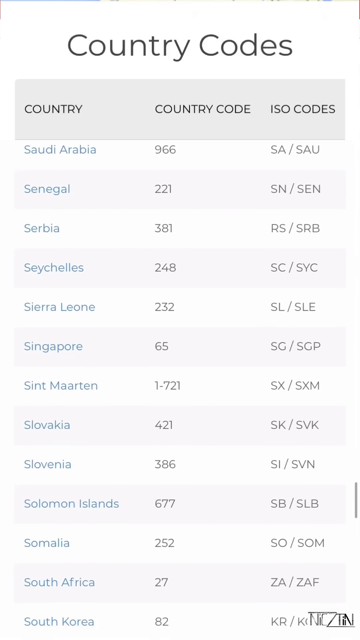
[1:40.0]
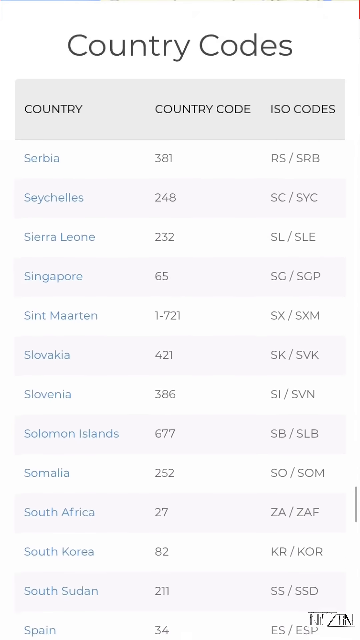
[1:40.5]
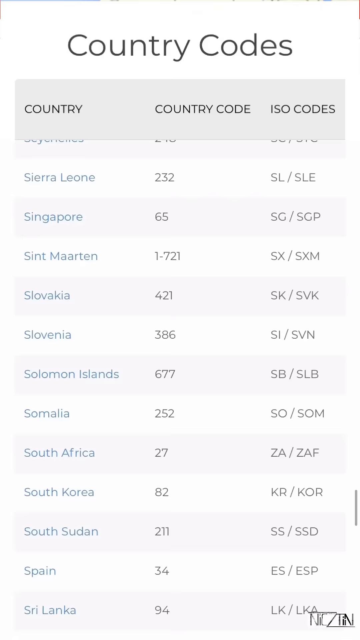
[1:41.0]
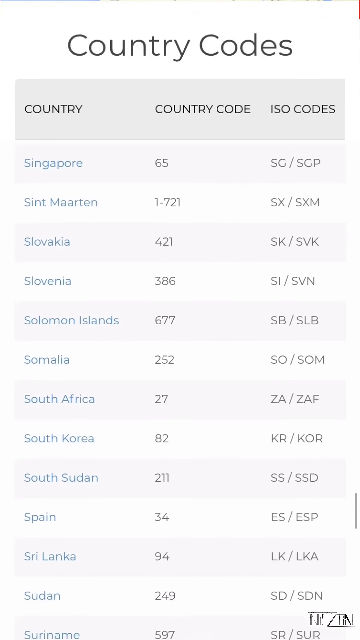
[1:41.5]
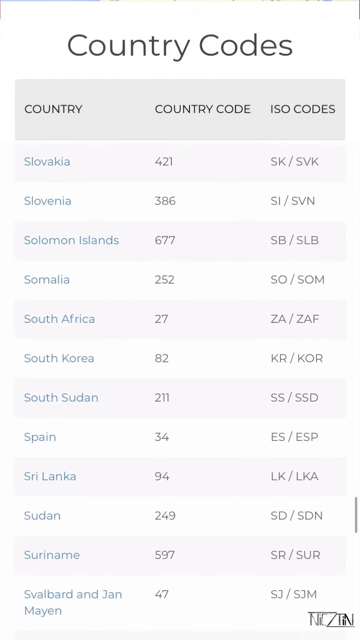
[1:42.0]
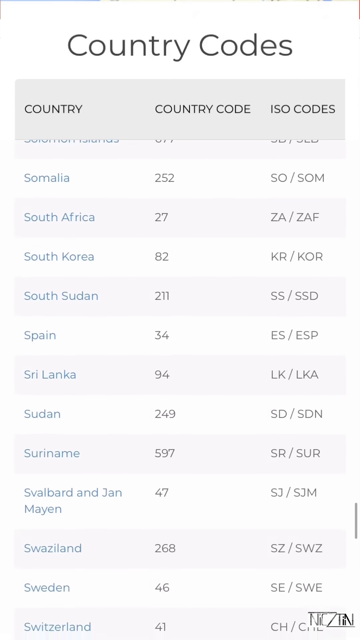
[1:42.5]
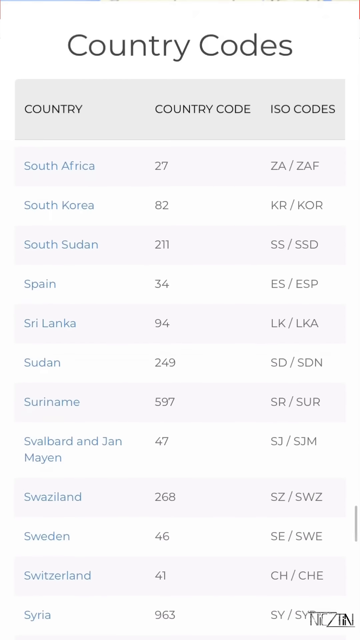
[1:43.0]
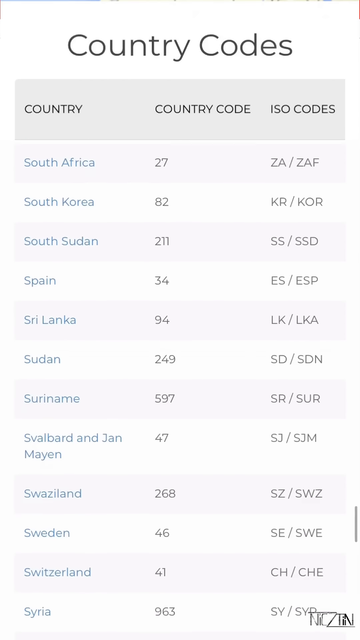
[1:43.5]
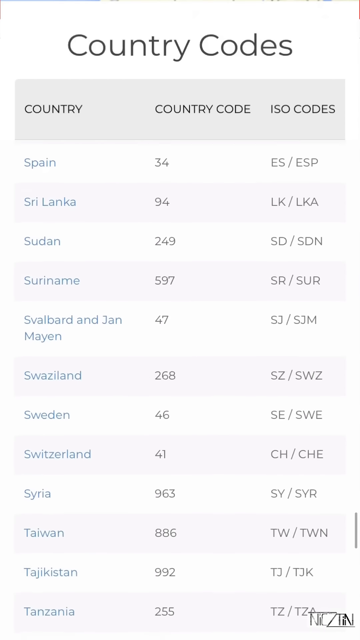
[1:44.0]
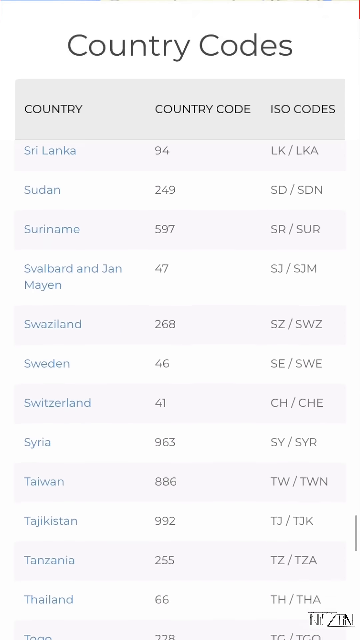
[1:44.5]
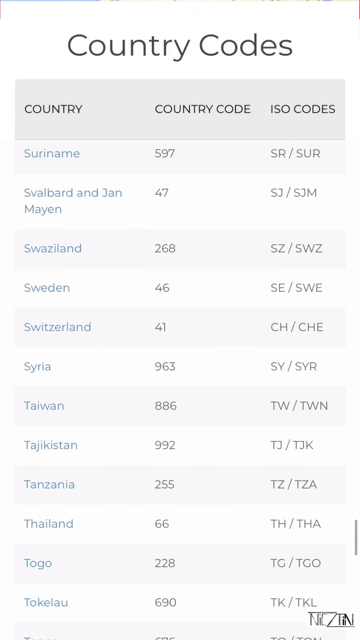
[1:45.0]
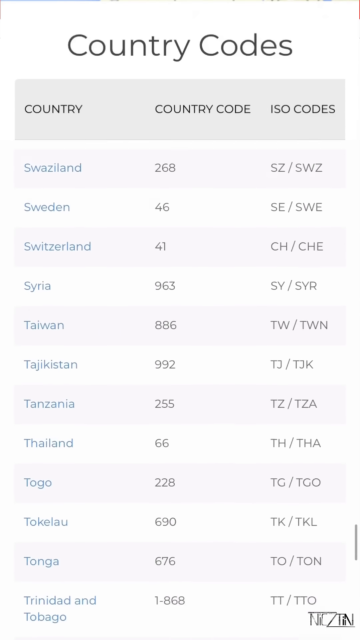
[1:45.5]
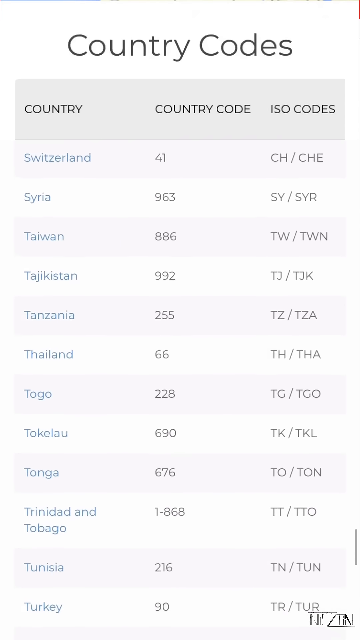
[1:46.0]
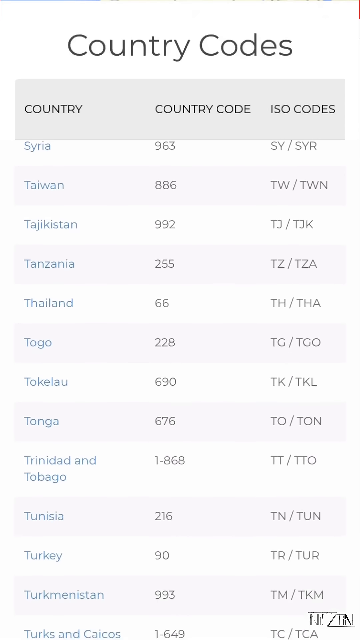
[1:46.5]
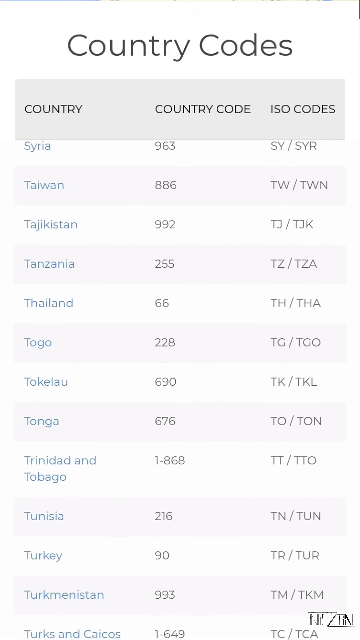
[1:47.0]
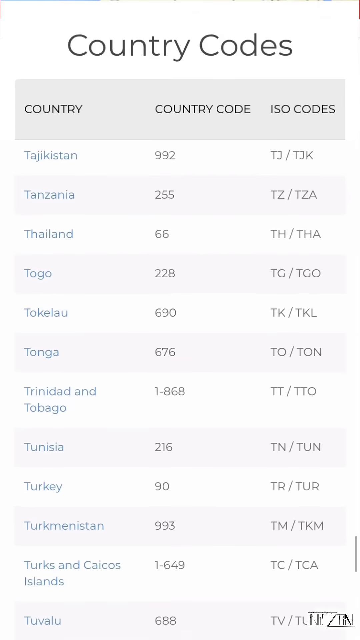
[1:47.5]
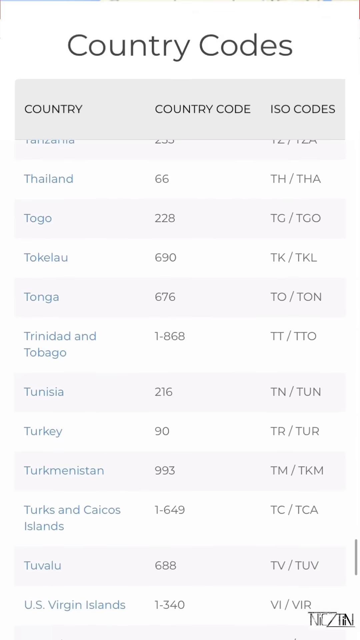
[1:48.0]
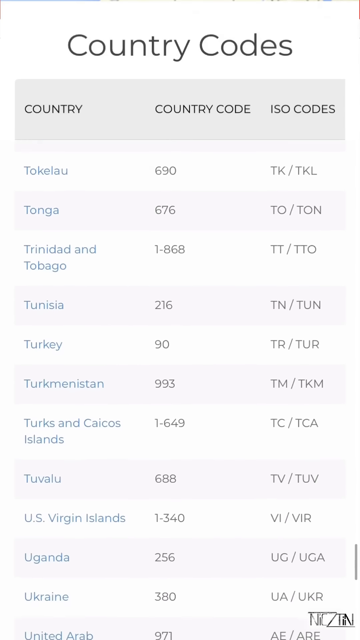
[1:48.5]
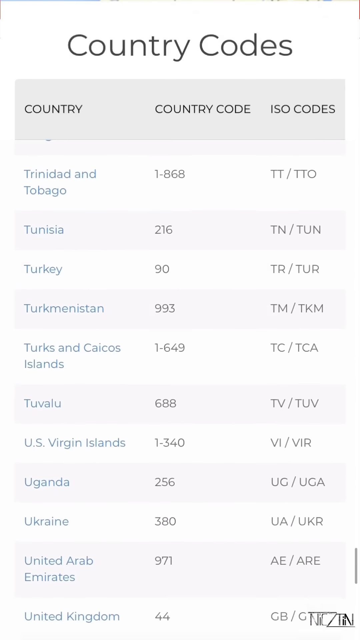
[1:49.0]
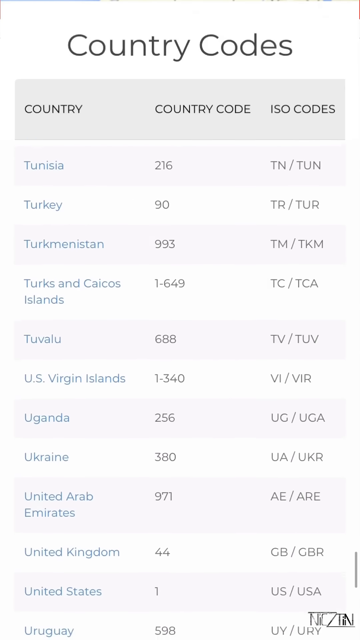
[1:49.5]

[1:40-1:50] The list continues through the S's and into the T's. The title "country codes" and the headings "country," "country code," and "ISO codes" stay fixed at the top, while the full country names, the code numbers, and the ISO letter series scroll beneath them. Country codes are mostly two- or three-digit numbers, though two entries show a one followed by a three-digit number. Each ISO code has two capital letters, a slash, and three capital letters. Among the S countries, the first letters of the ISO codes differ, but the second part seems to always start with S.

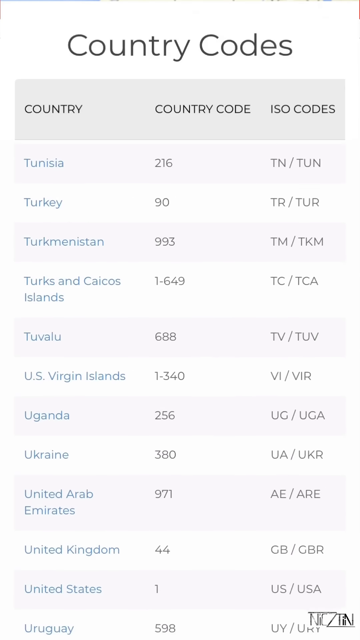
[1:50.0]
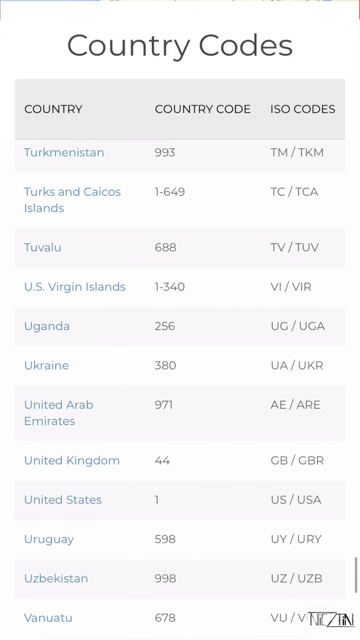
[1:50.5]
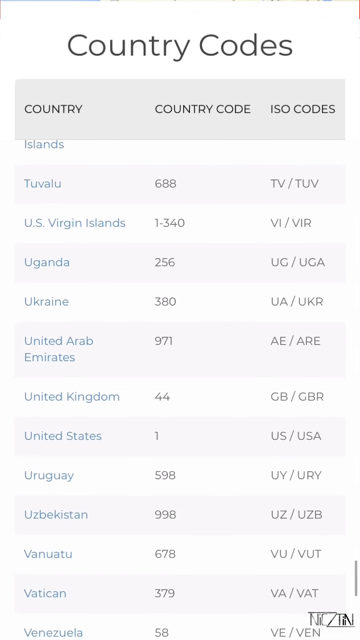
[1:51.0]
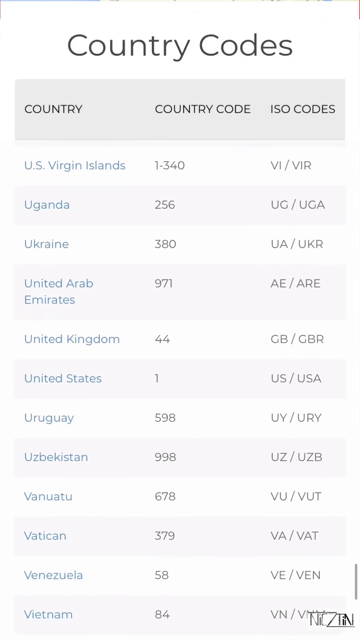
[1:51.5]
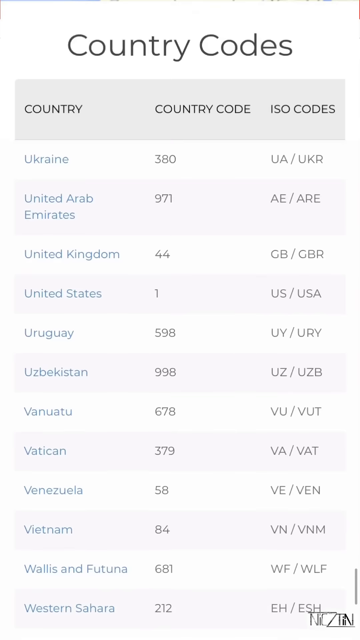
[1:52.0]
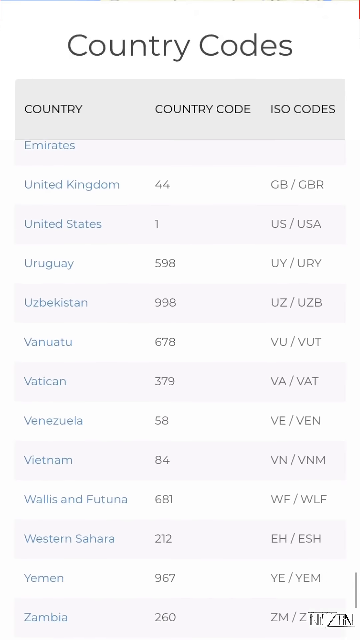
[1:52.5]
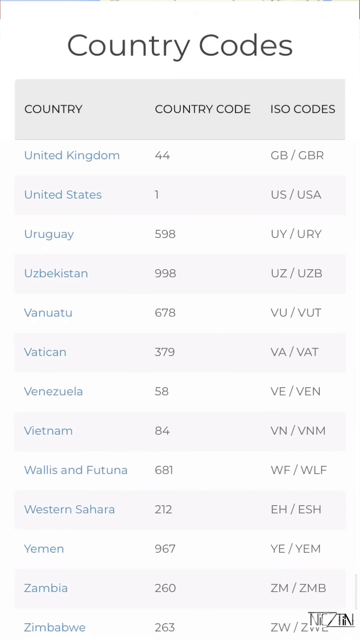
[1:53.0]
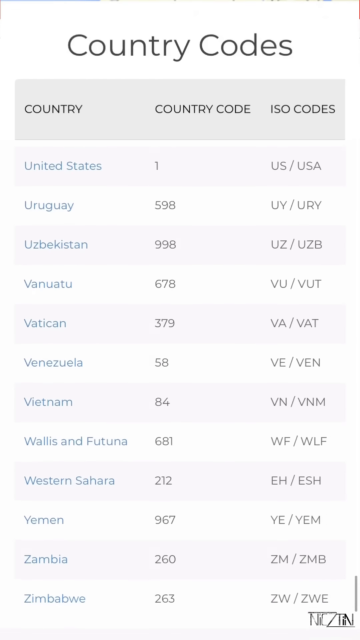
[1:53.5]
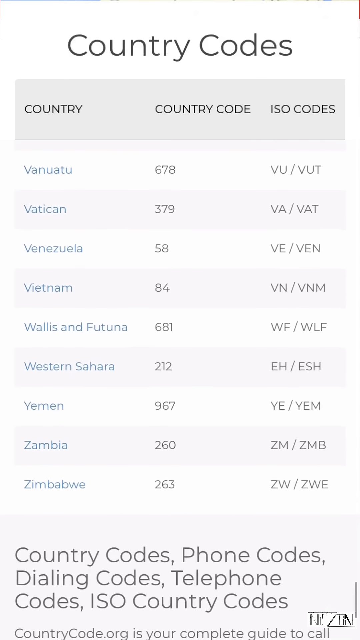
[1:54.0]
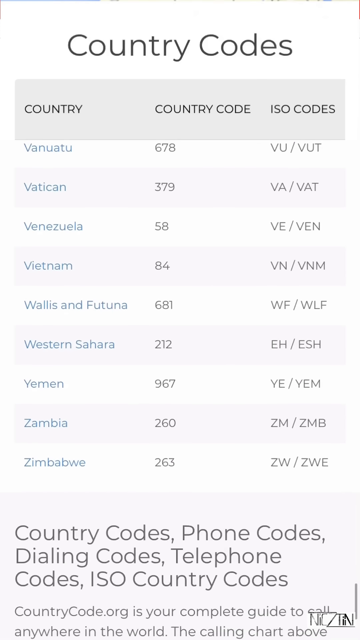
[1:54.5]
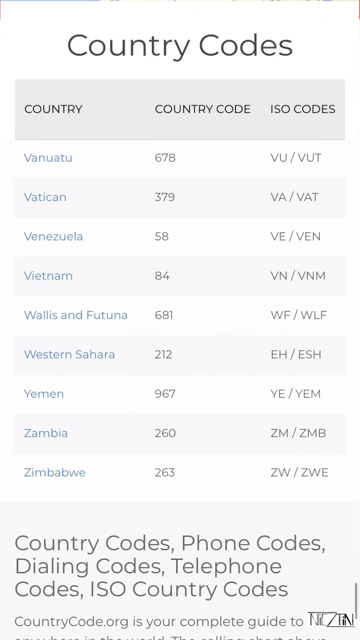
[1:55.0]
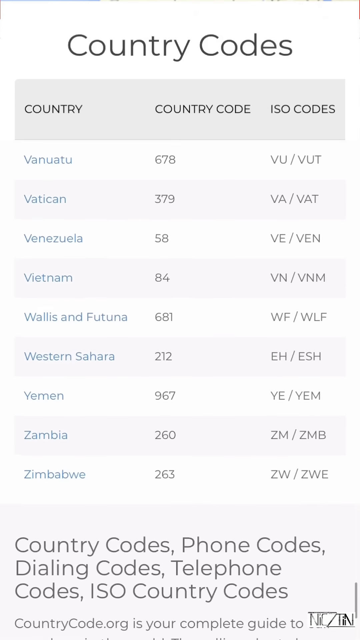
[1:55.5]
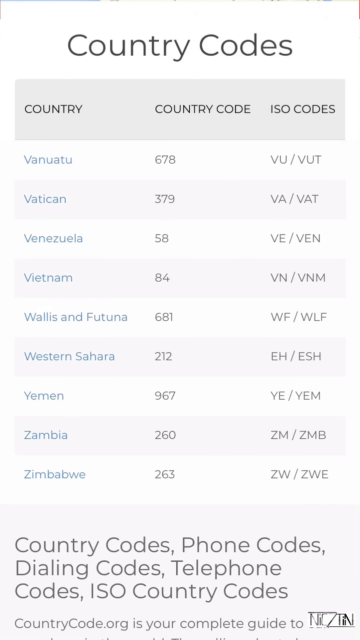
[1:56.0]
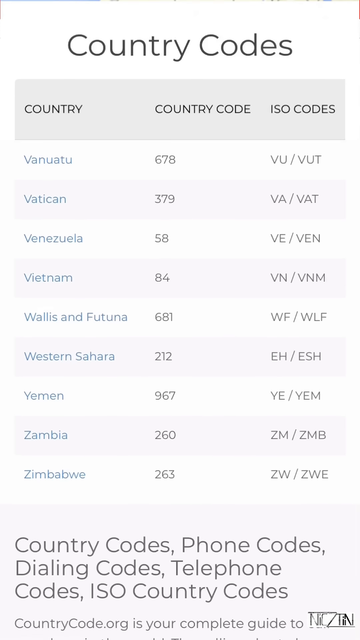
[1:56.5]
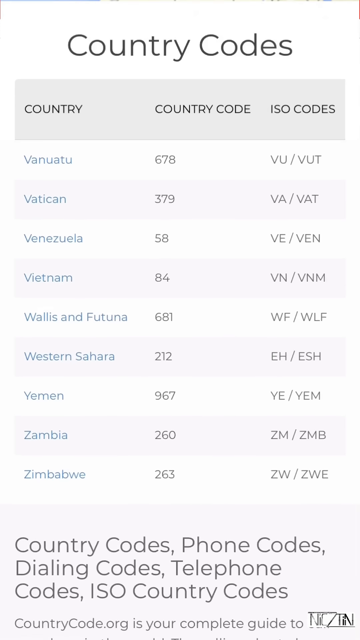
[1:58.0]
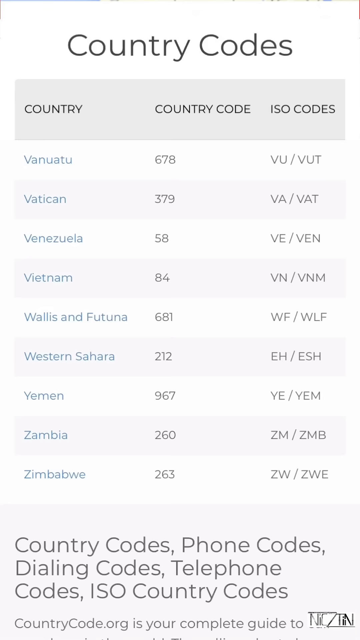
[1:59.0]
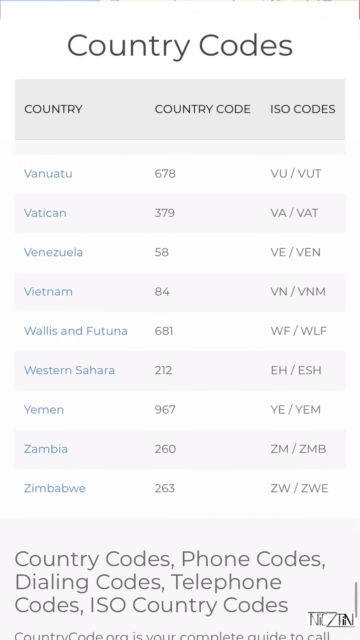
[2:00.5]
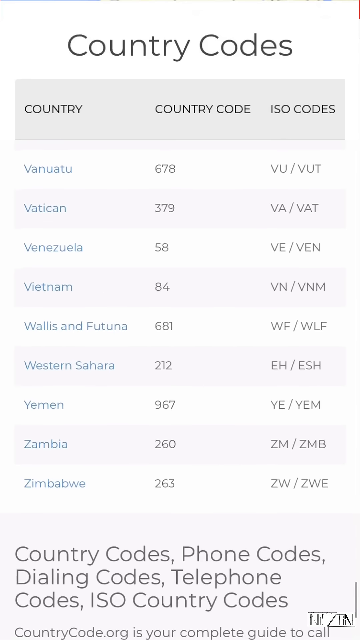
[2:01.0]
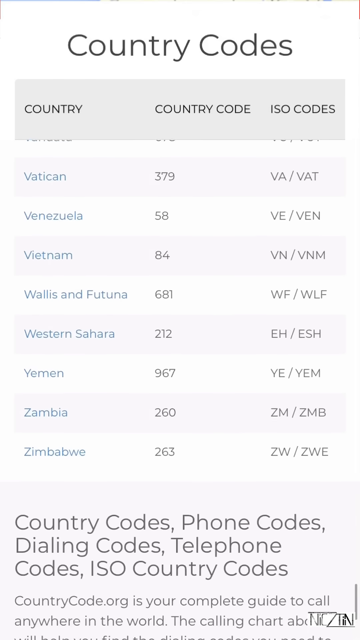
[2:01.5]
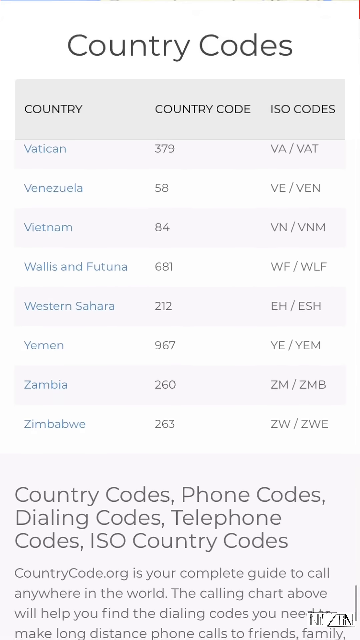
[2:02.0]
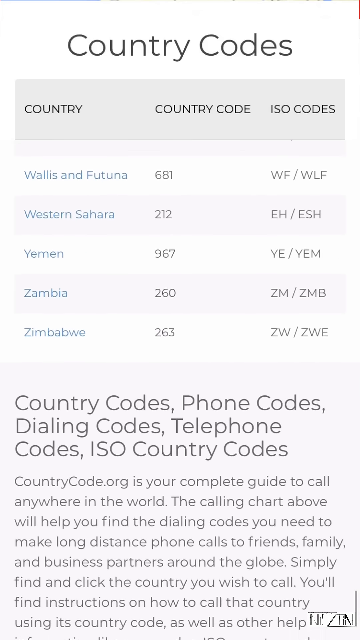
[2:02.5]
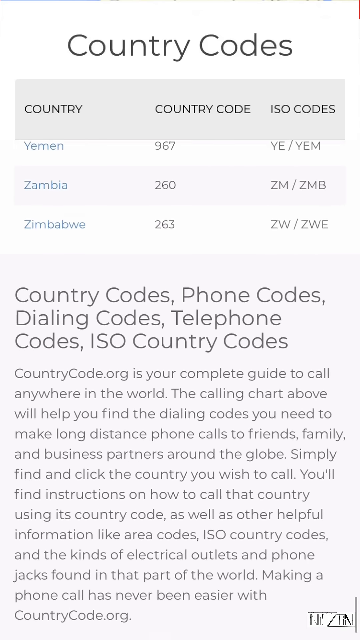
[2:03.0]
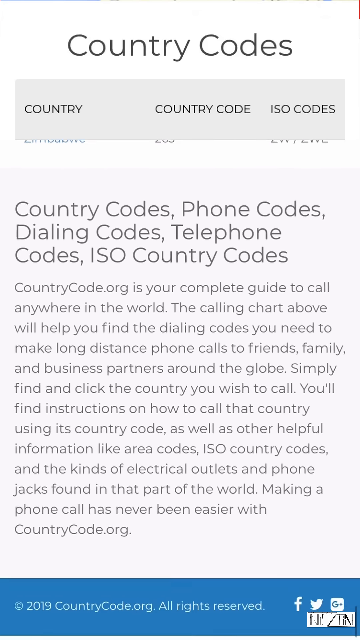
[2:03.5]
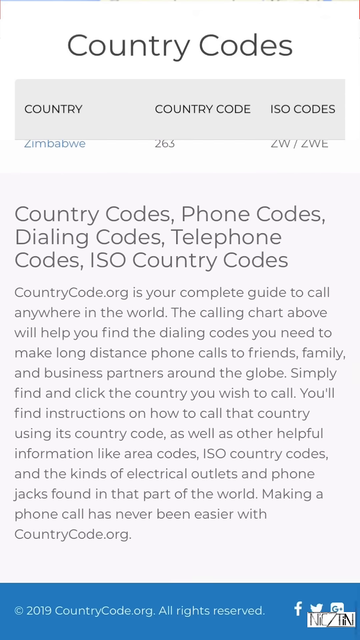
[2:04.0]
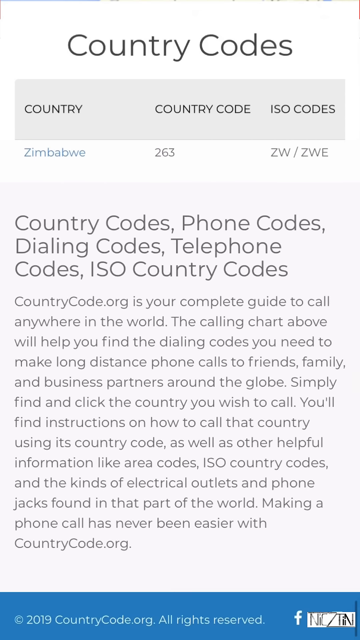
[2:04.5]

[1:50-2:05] The list of countries keeps scrolling, showing each country's name, code, and ISO code. It starts in the T's with Tunisia, Turkey, and Turkmenistan, passes the US, then moves through the V's, including Vietnam, the W's, and finally the Z's, of which there are two.